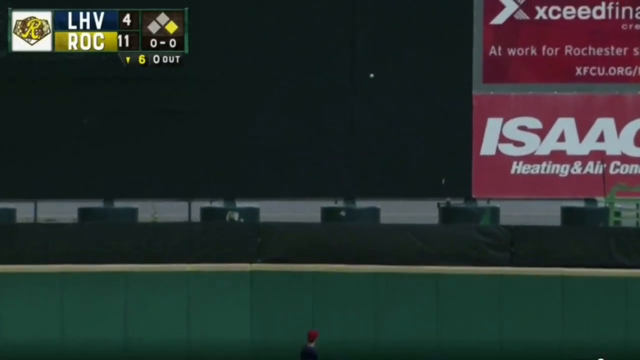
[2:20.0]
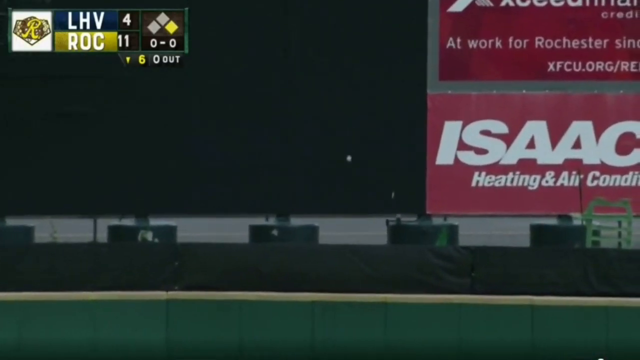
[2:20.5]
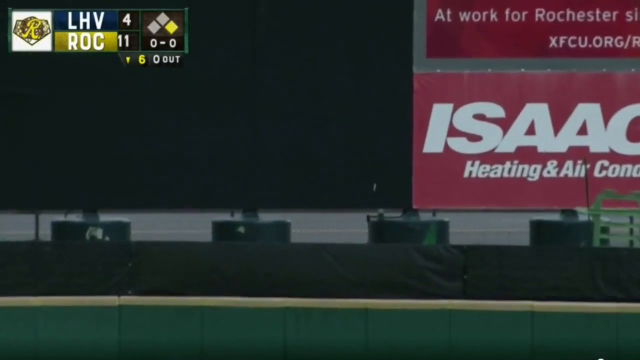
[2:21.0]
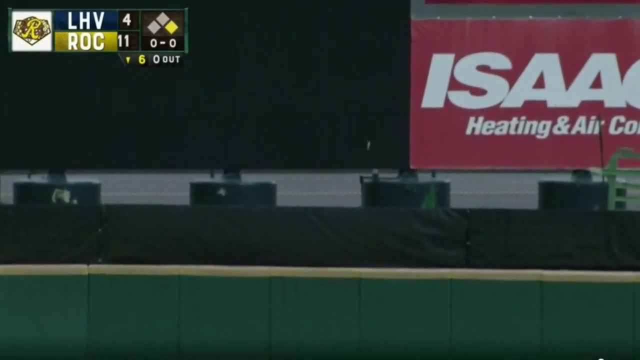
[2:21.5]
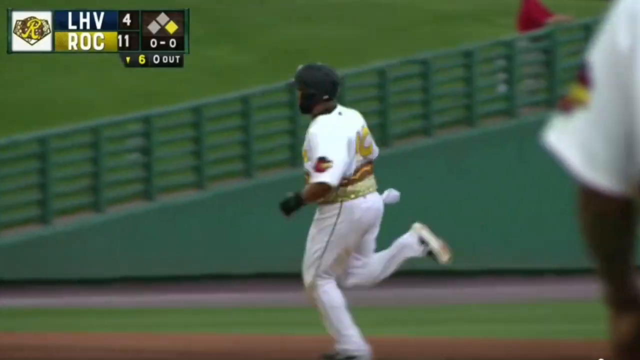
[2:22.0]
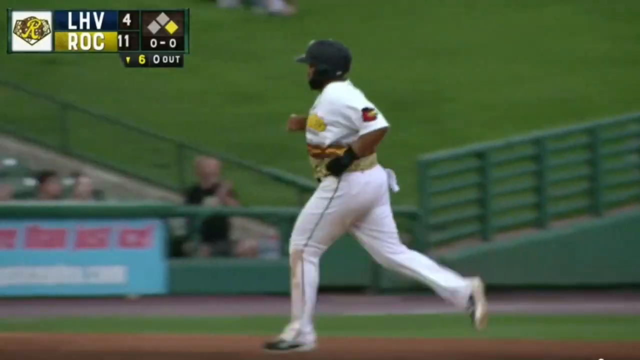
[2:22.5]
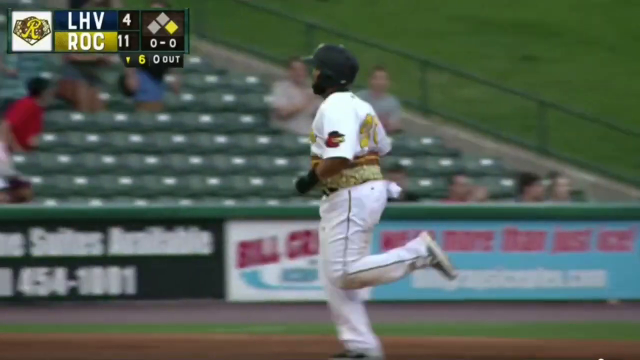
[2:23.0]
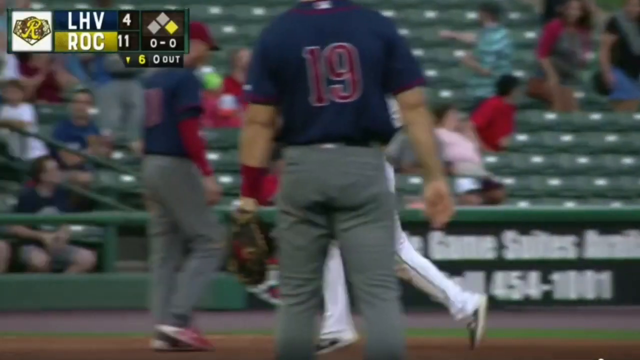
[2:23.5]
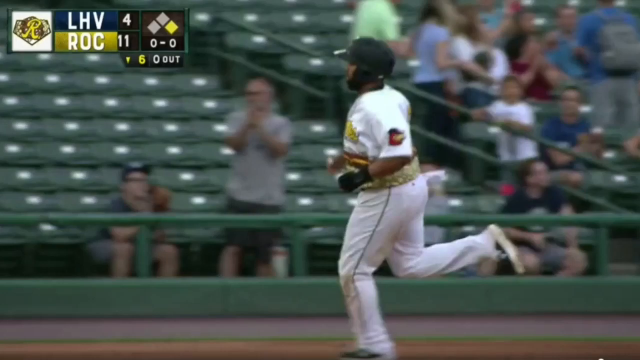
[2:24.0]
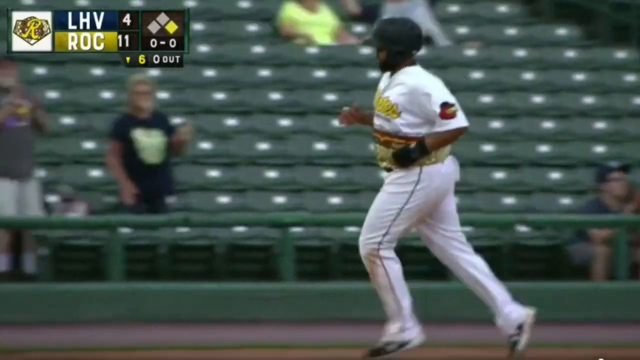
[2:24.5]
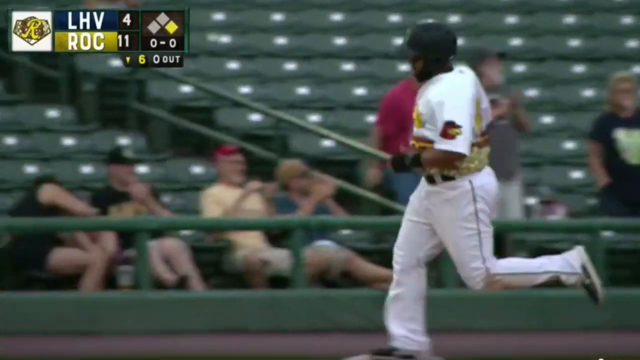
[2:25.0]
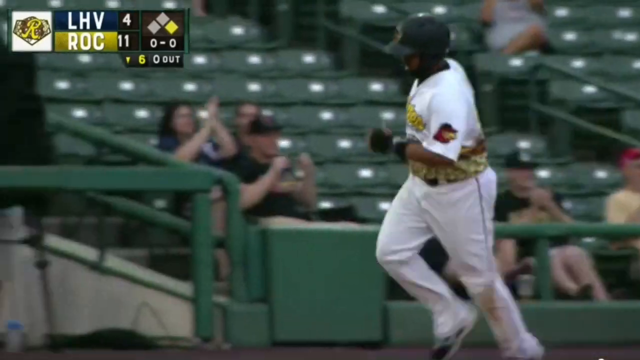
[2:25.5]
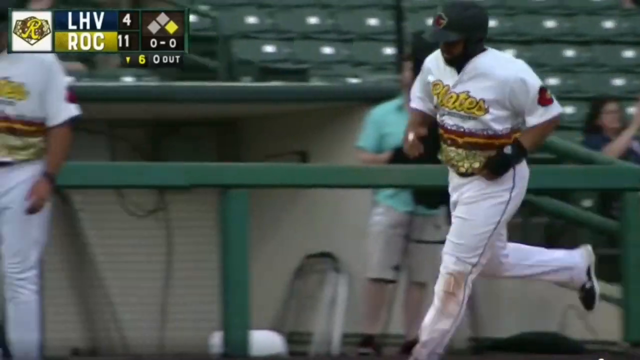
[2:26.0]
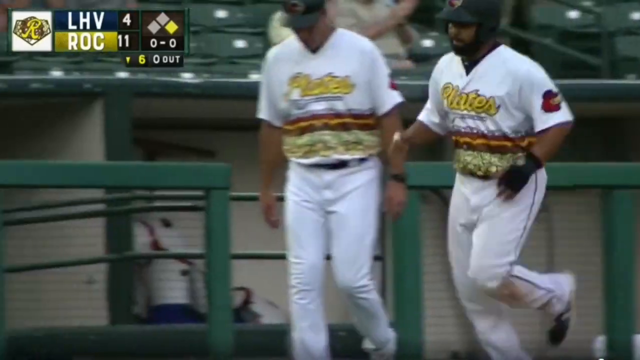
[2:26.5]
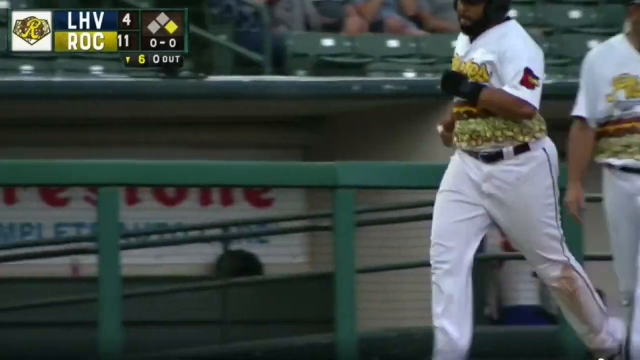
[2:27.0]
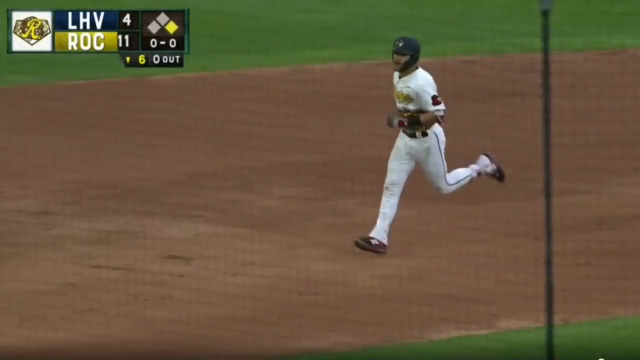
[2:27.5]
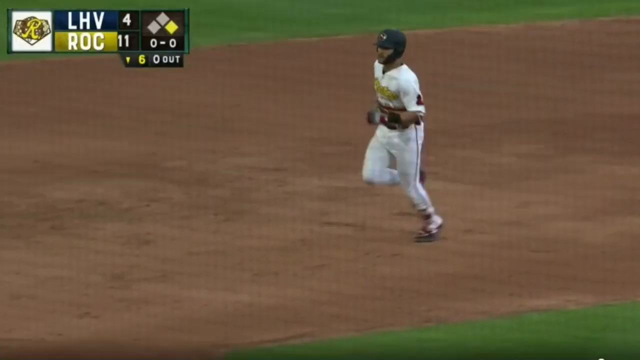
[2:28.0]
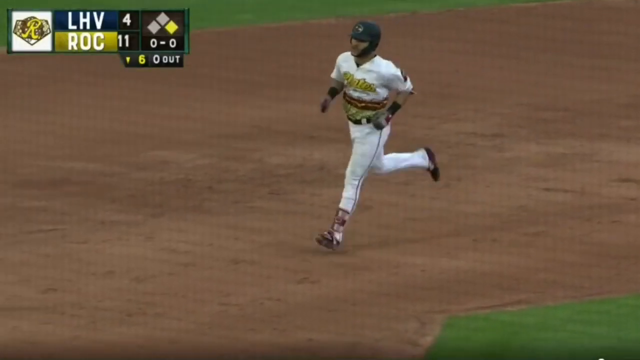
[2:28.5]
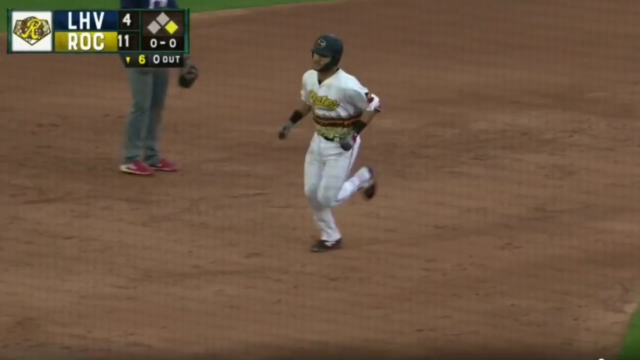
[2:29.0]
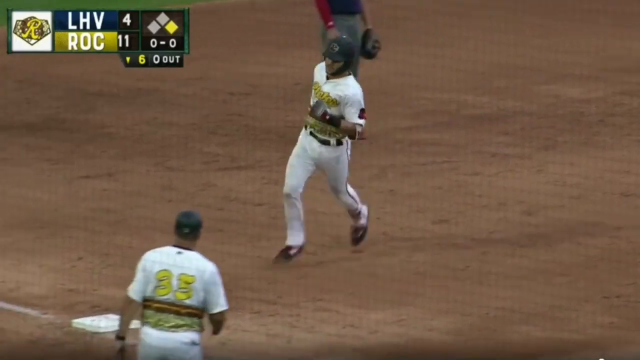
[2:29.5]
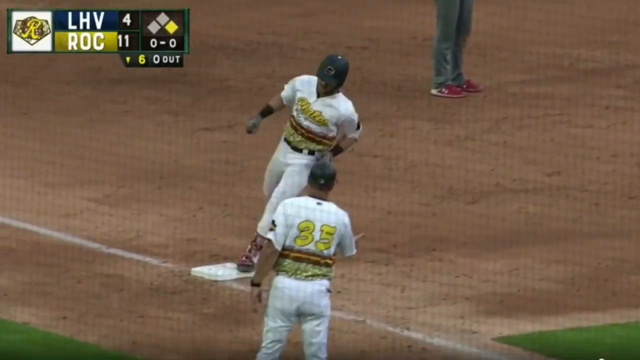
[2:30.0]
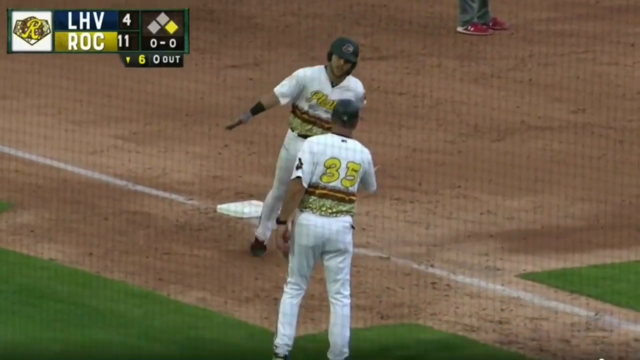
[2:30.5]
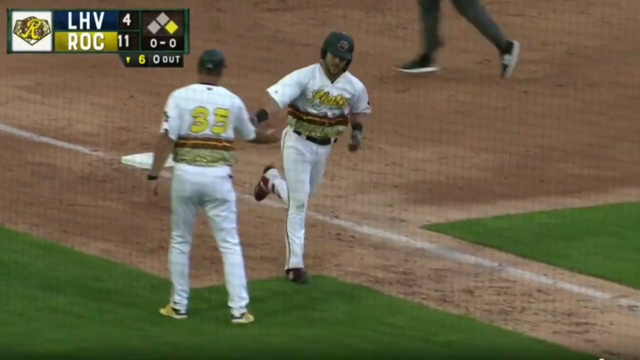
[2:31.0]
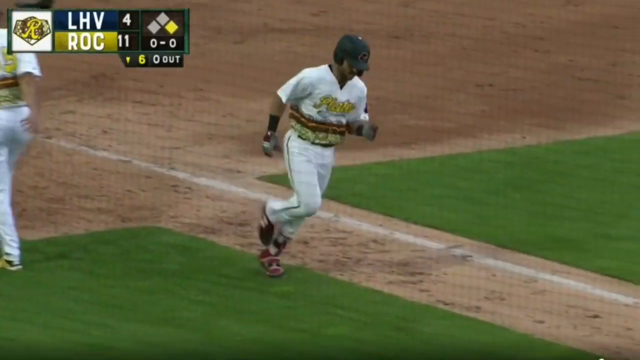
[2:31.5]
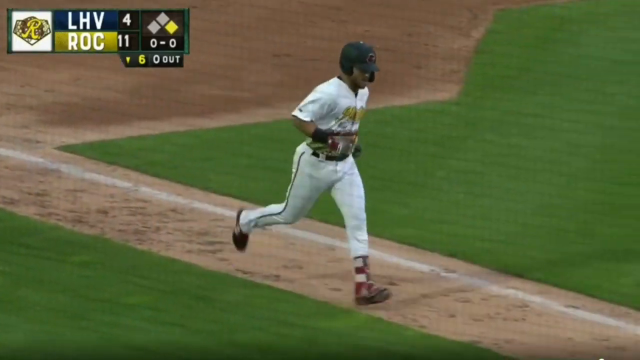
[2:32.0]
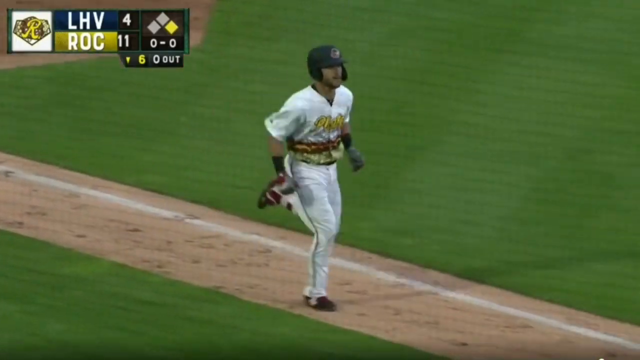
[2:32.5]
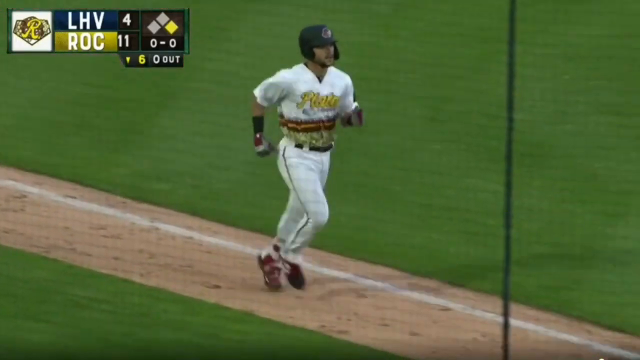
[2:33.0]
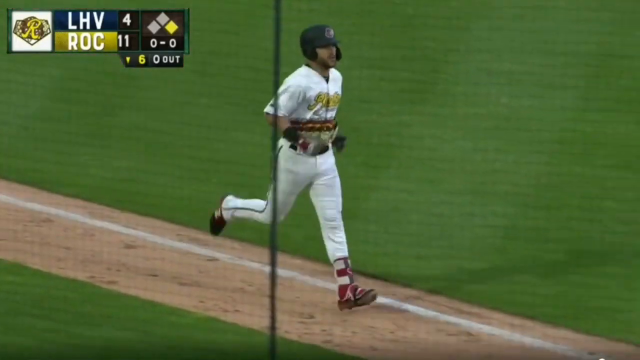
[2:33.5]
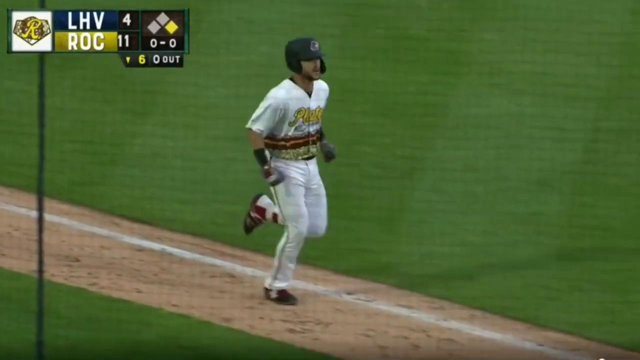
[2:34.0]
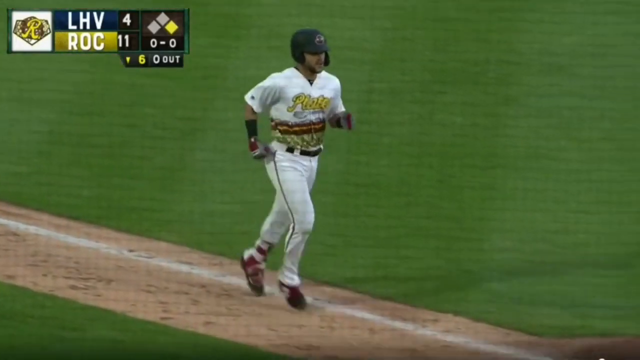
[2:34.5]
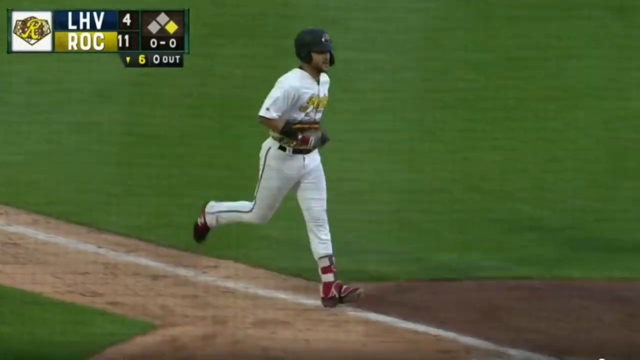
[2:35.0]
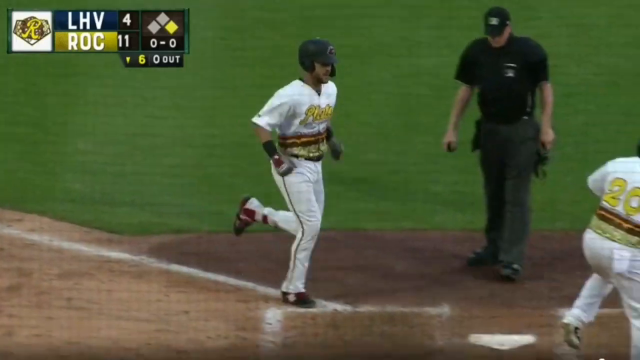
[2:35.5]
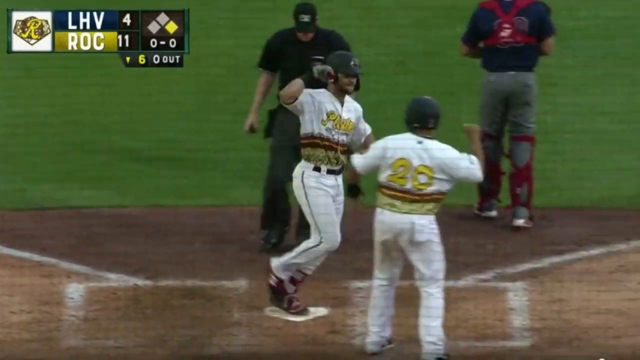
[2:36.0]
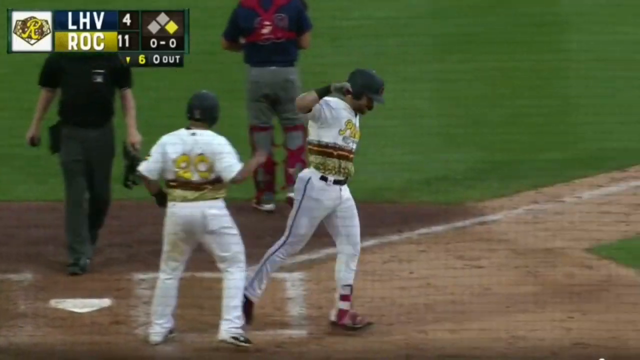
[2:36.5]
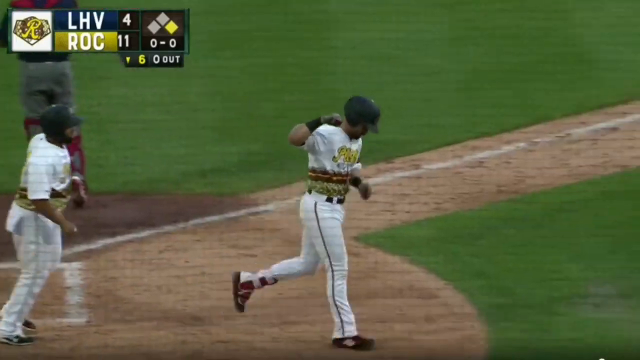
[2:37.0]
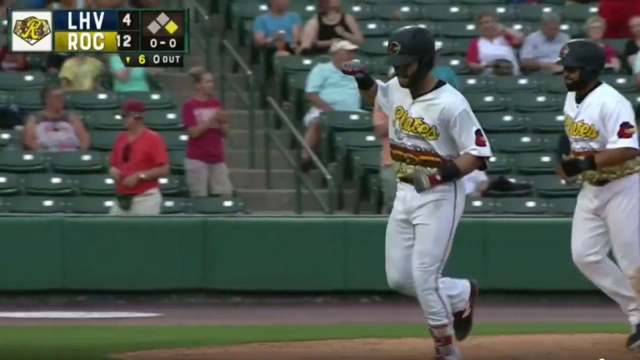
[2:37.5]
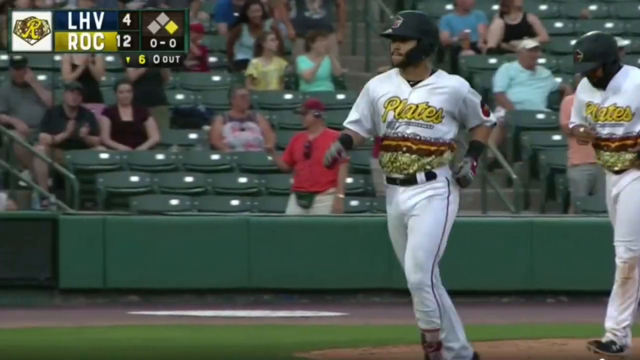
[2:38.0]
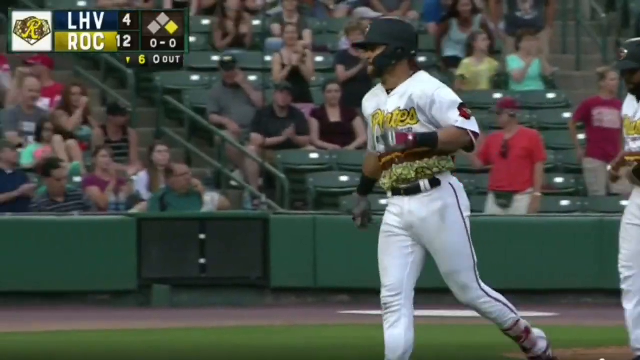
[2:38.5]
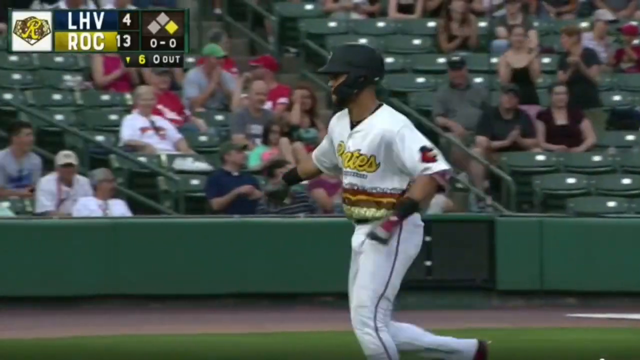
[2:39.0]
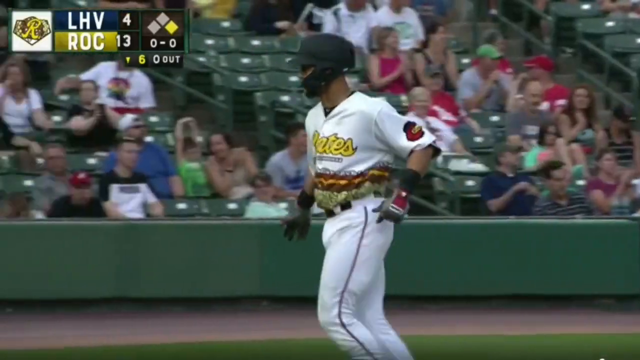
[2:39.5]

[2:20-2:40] A batter hits the ball out of the Staten Island Arena as players compete on a field with a lot of grass and dirt. The background shows many abbreviations, logos and symbols. The top left corner of the screen shows LHV versus ROC, with a large difference in the score between the two teams.